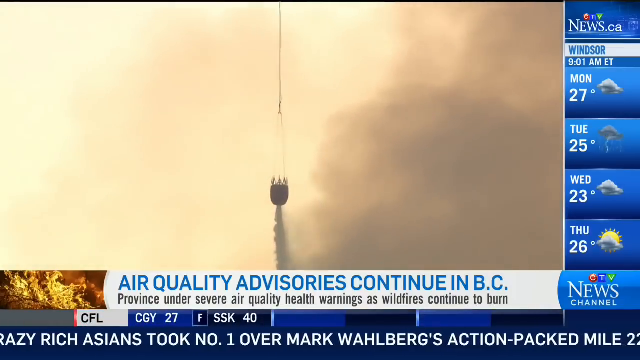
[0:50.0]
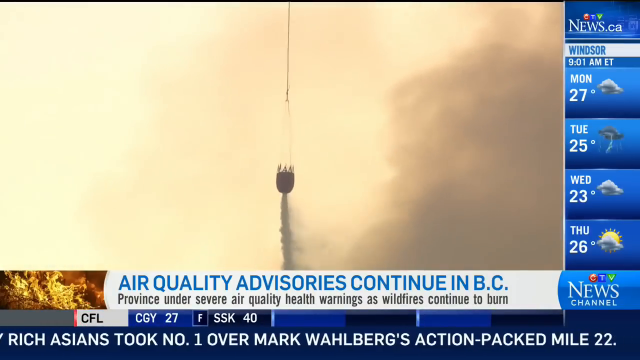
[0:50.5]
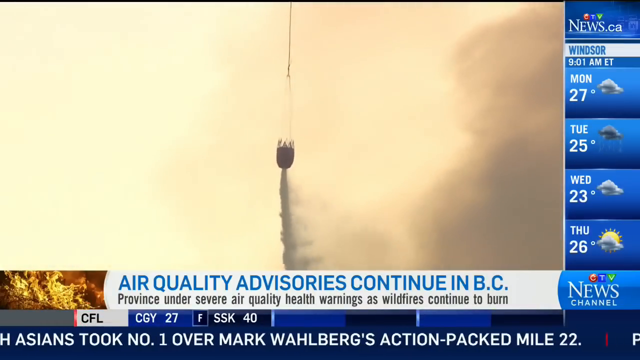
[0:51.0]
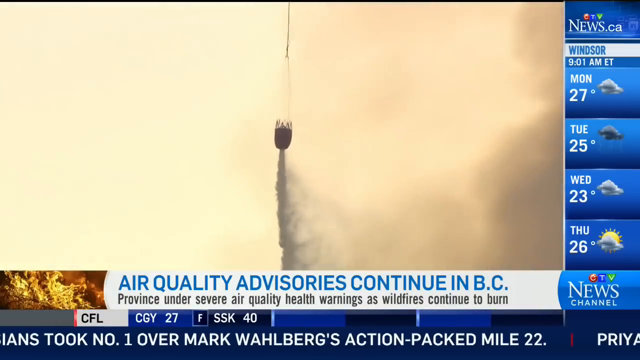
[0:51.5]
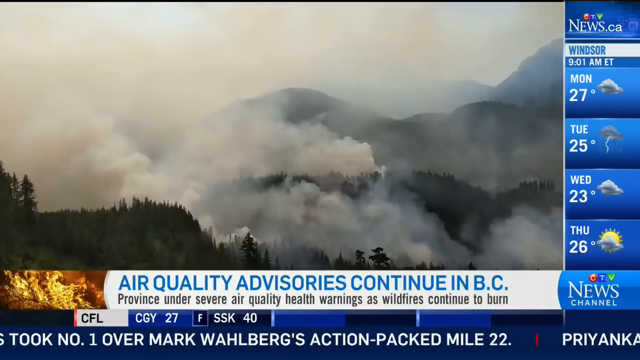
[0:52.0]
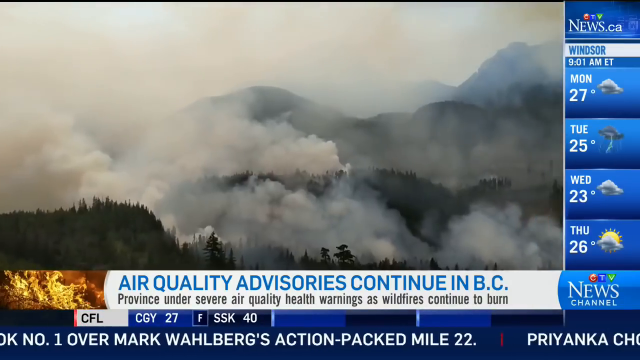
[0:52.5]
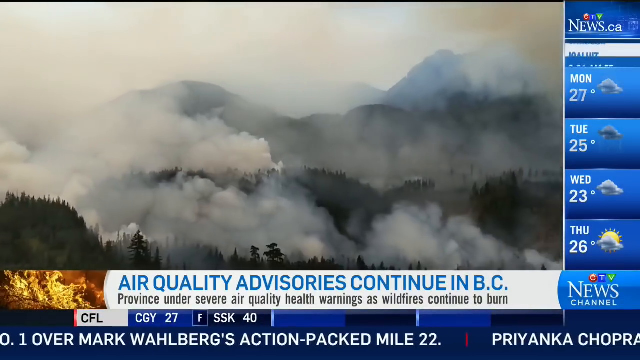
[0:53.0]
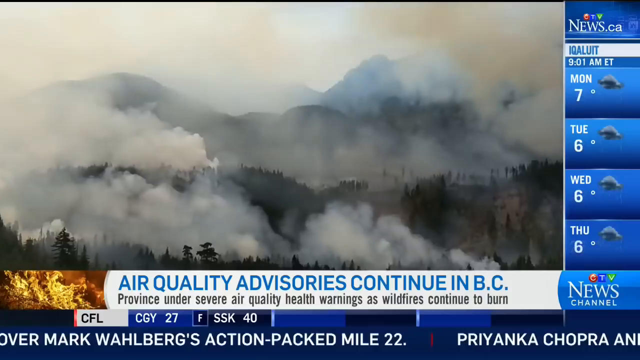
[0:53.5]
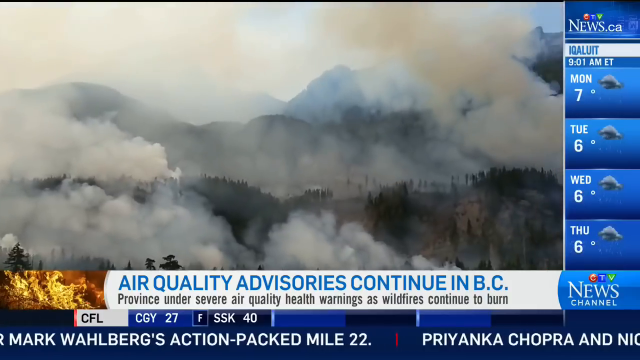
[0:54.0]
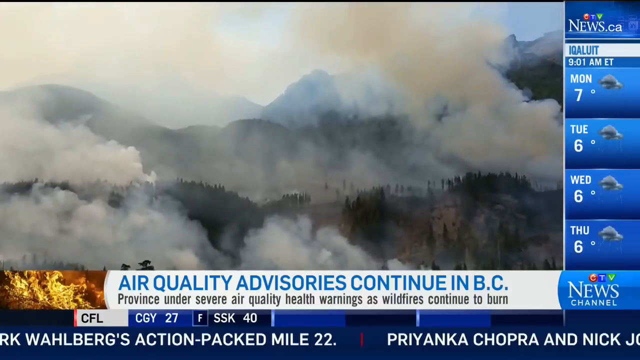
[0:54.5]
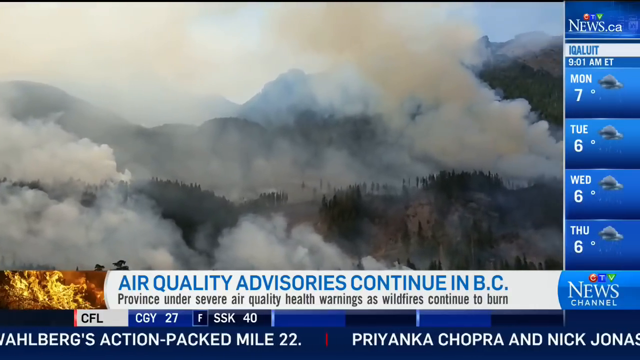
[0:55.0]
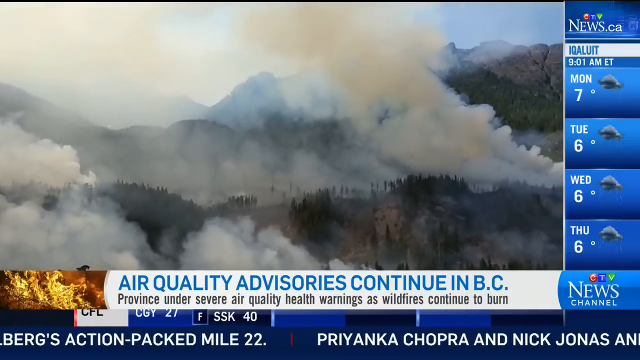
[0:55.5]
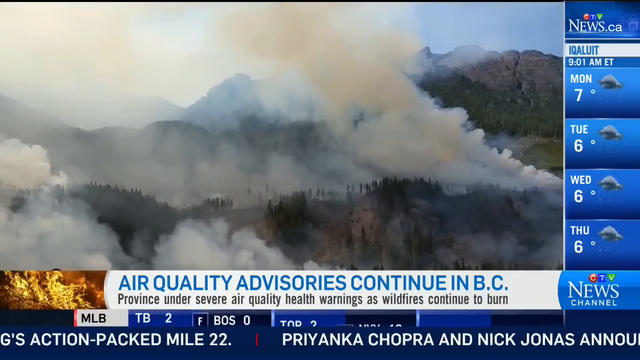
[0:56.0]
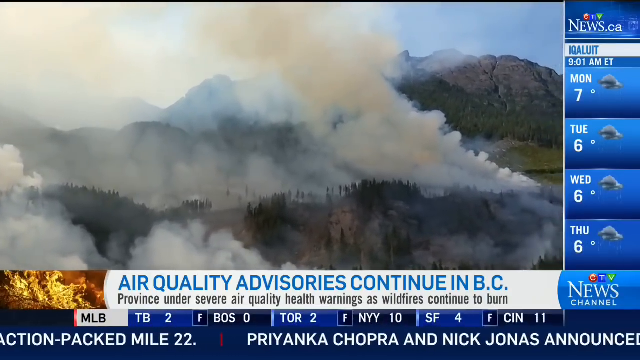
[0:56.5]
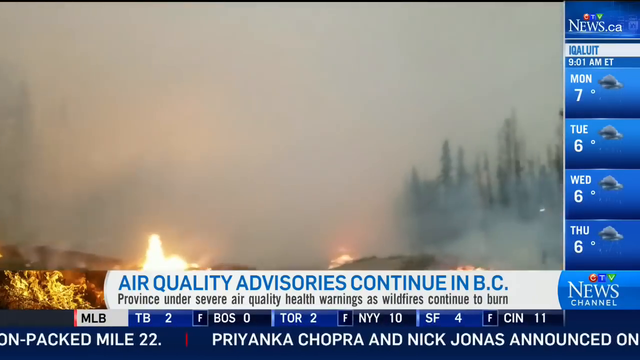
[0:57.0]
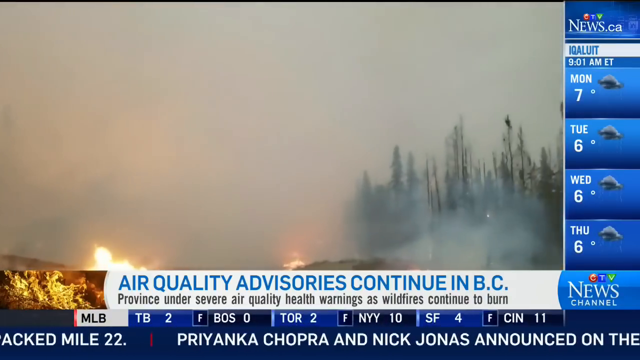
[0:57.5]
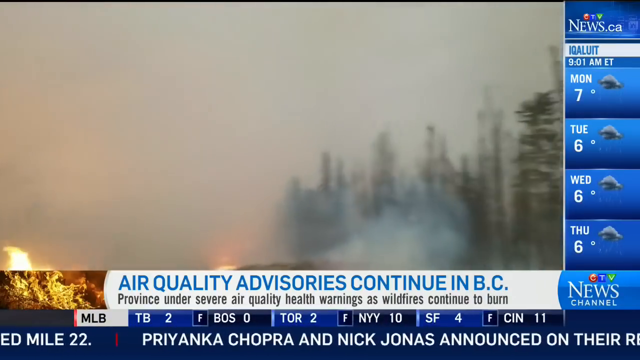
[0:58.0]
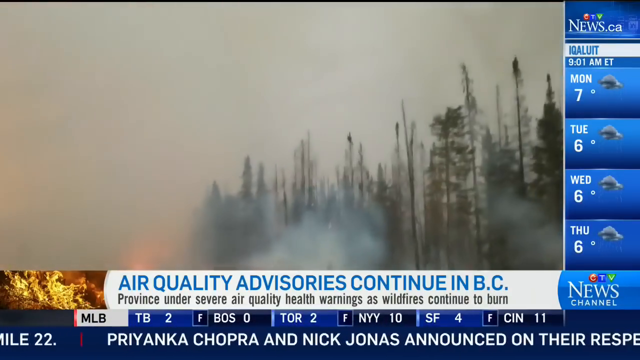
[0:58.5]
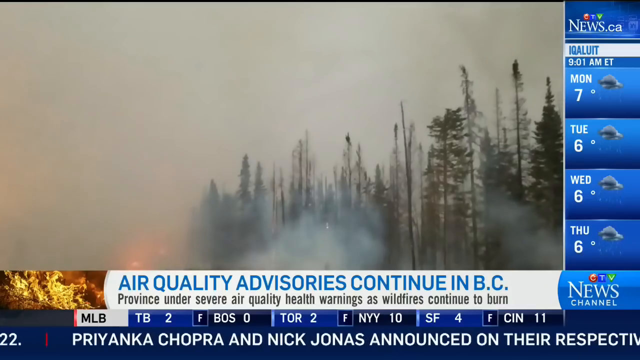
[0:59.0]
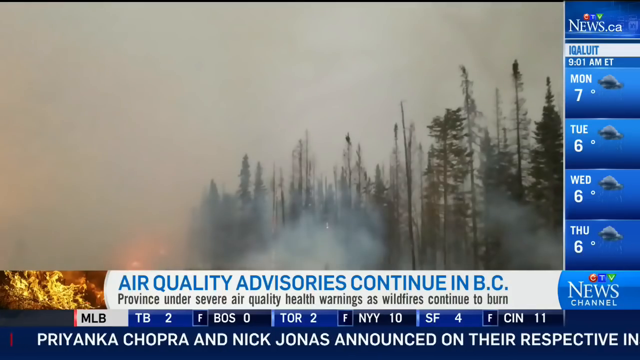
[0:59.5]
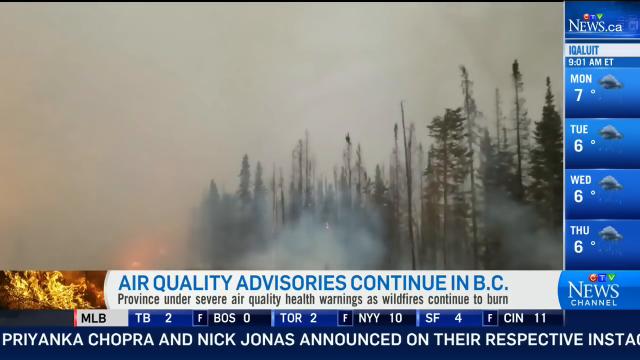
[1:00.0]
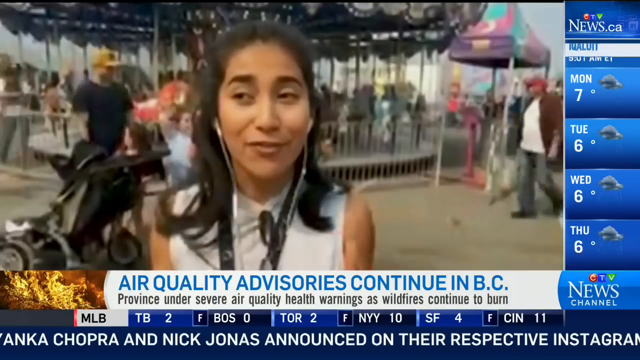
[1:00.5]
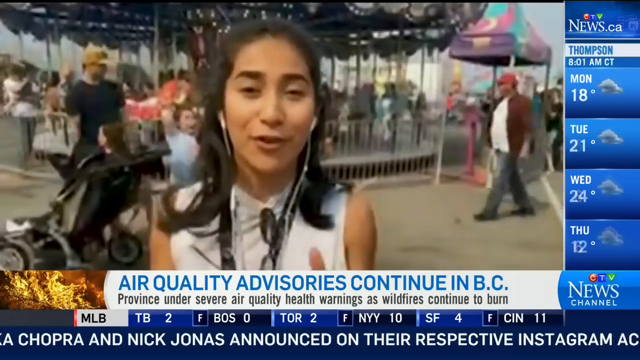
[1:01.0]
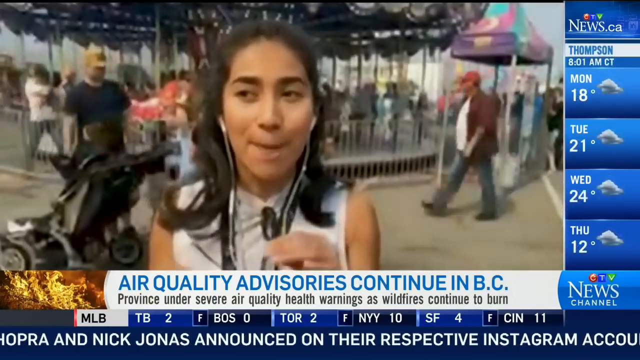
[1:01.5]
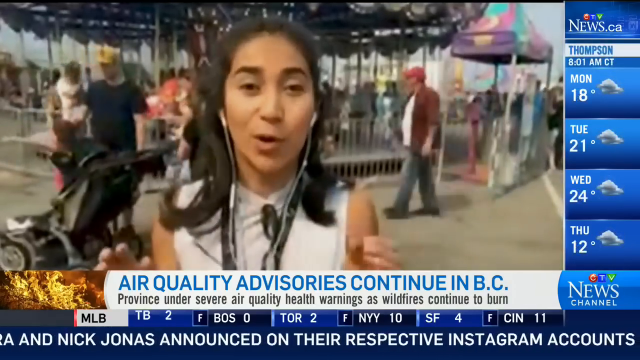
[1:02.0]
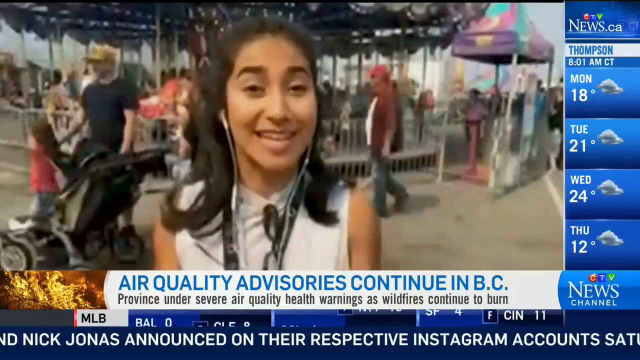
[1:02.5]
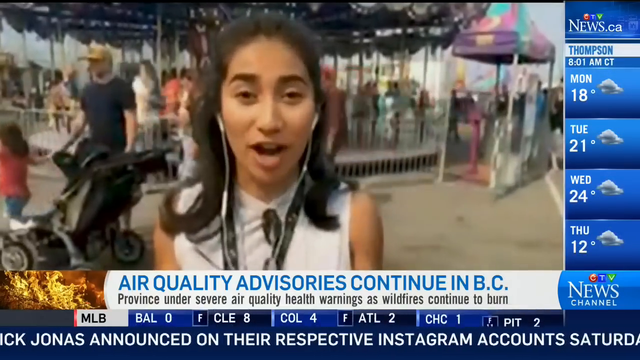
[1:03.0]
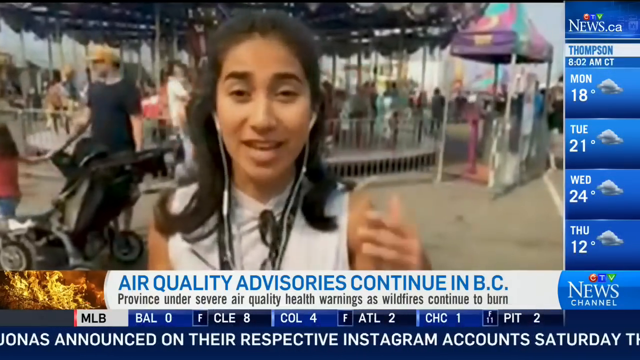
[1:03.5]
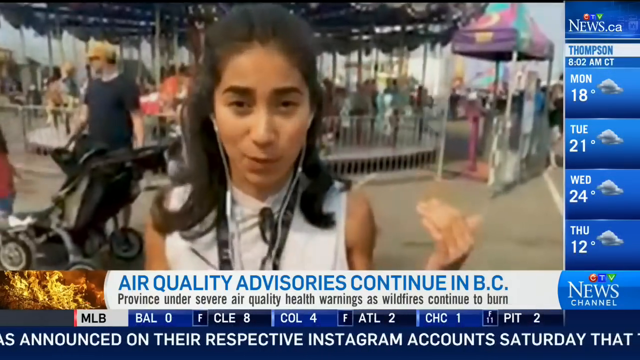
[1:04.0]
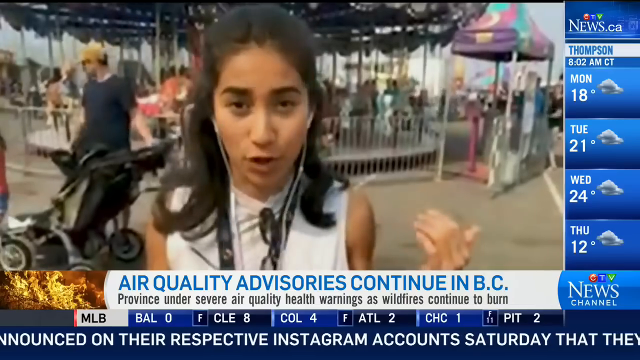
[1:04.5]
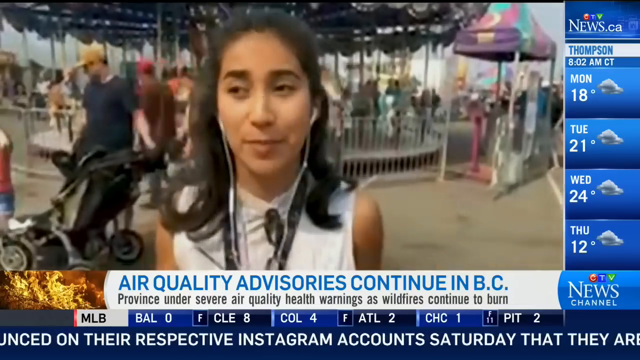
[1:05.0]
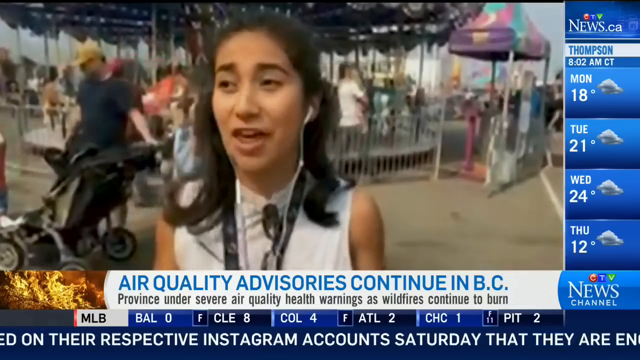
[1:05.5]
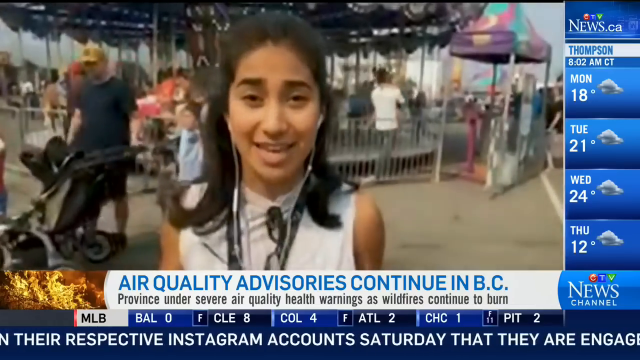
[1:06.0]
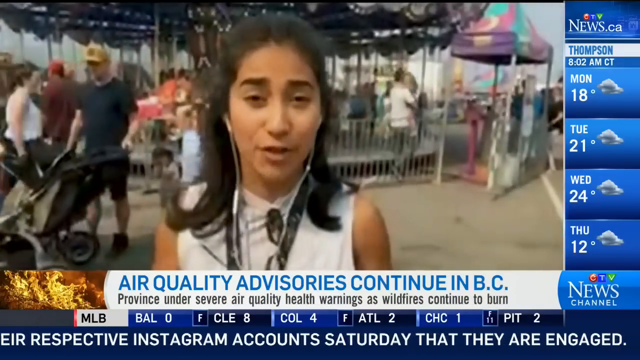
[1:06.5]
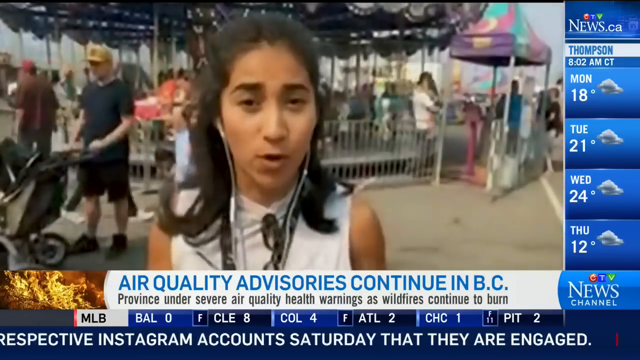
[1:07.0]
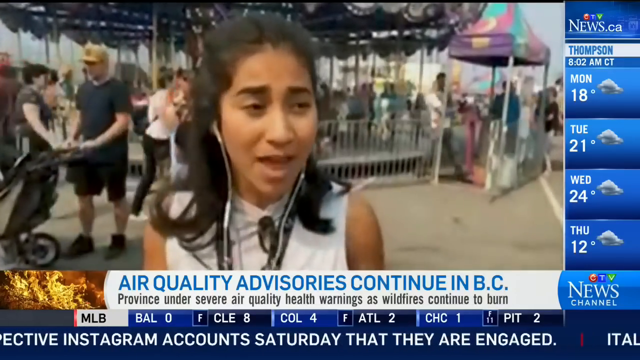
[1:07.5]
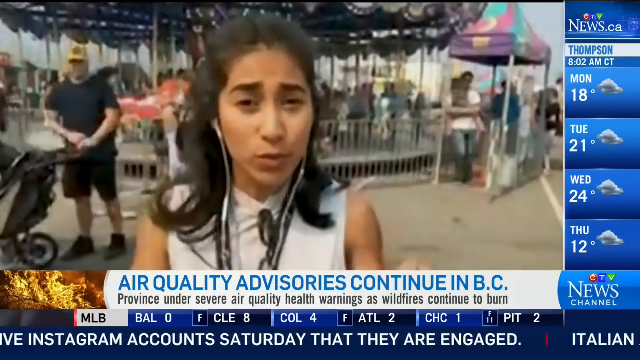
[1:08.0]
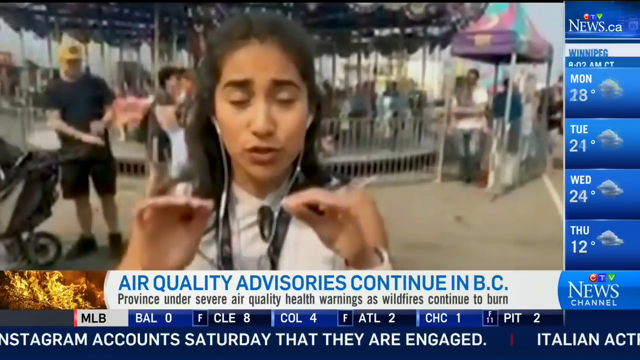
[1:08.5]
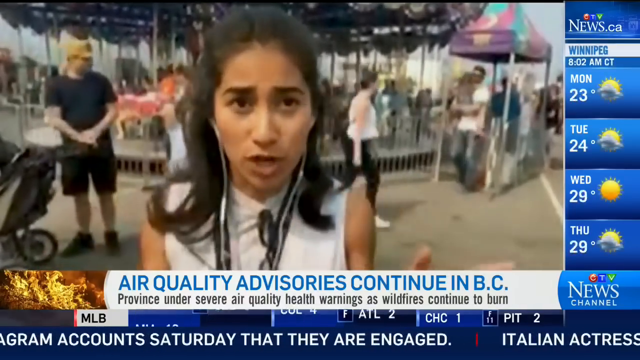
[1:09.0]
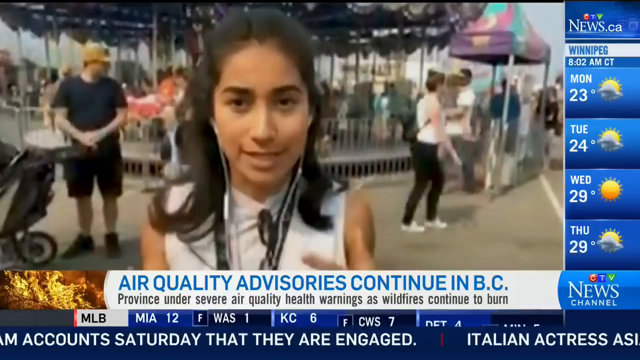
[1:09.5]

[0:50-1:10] The helicopter has a long string on its bottom connected to a bucket. The bucket has a hole on the bottom that is only activated when it sprinkles water above the burning trees. Plenty of white smoke rises from the ground as the helicopter tries to stop the fire. Many trees have burned out and the forest is damaged; some trees are still burning, and some parts of the mountains are still burning as well. A different news reporter appears at a carnival: a female in a white dress wearing white wired headphones. Behind are people at the carnival doing their own thing. On the right side is a colorful tent, and on the left side a male in black clothes pushes a stroller.